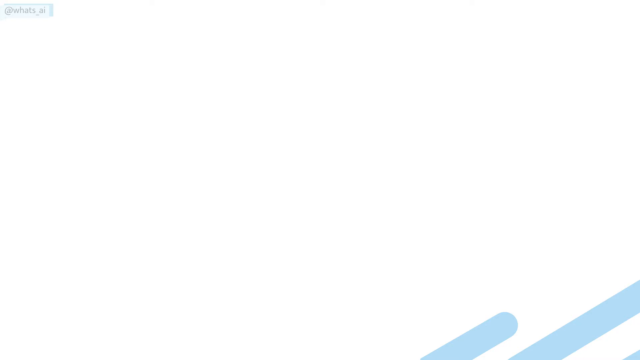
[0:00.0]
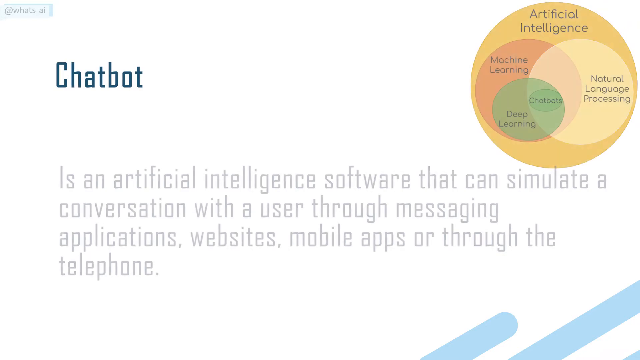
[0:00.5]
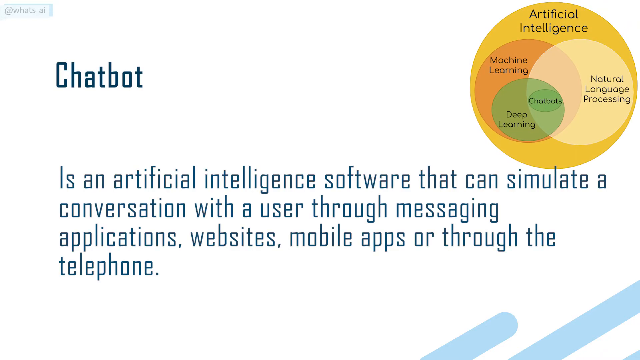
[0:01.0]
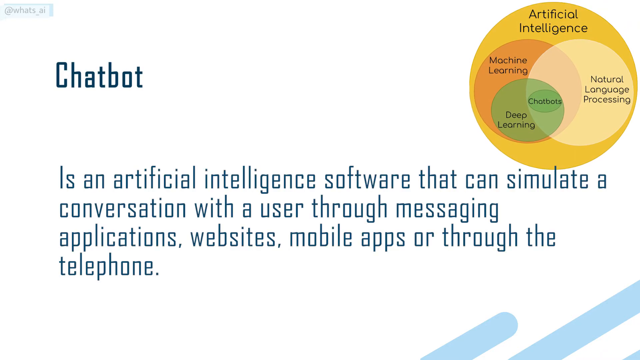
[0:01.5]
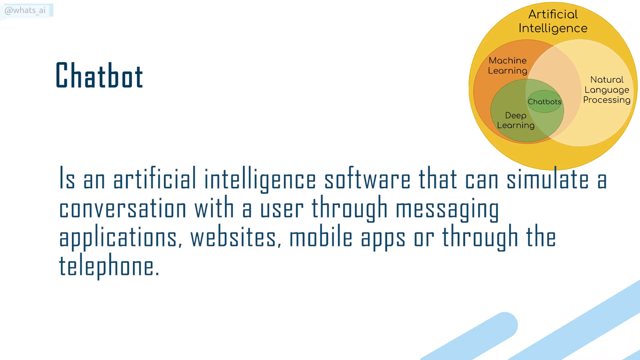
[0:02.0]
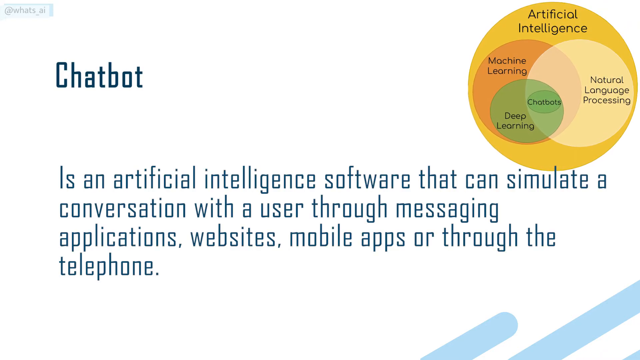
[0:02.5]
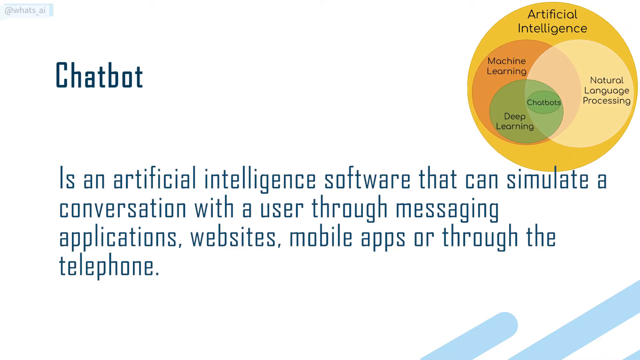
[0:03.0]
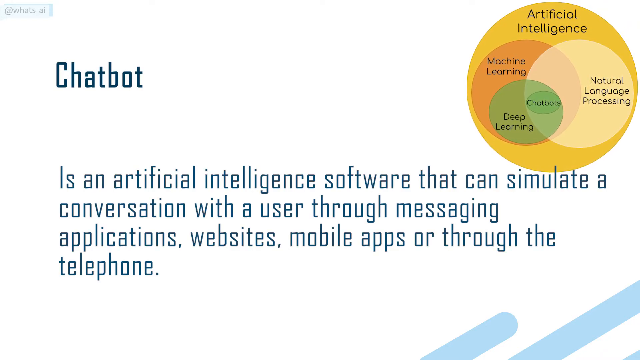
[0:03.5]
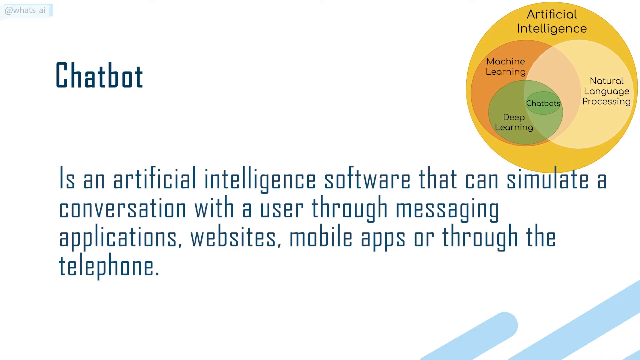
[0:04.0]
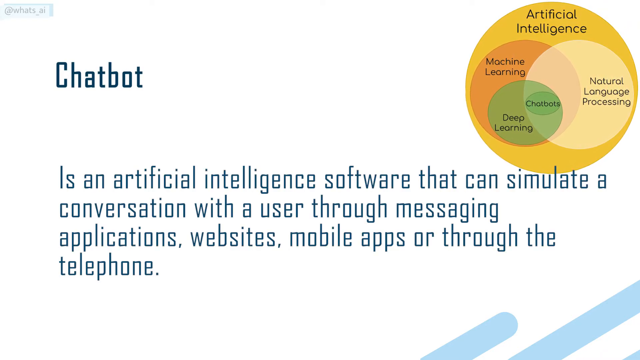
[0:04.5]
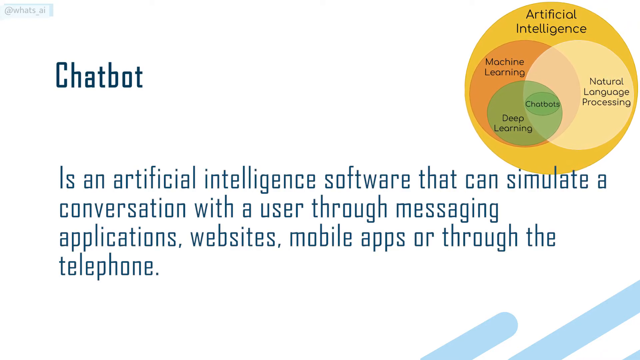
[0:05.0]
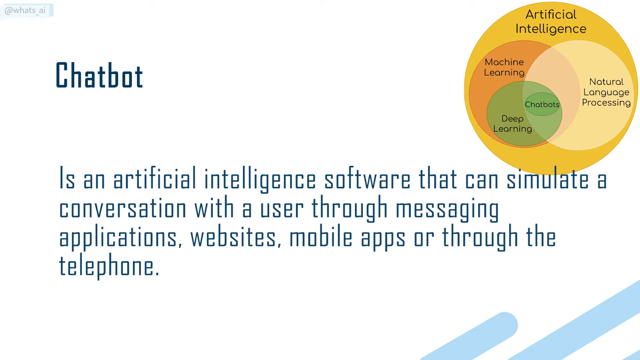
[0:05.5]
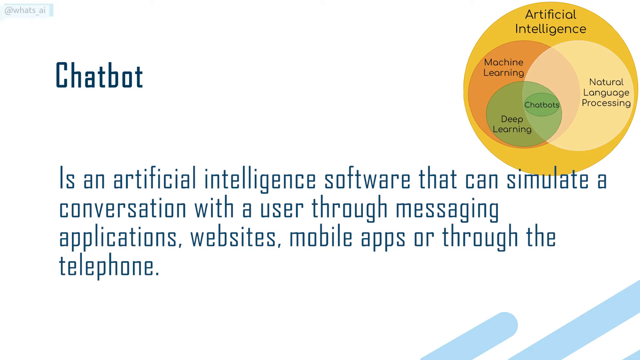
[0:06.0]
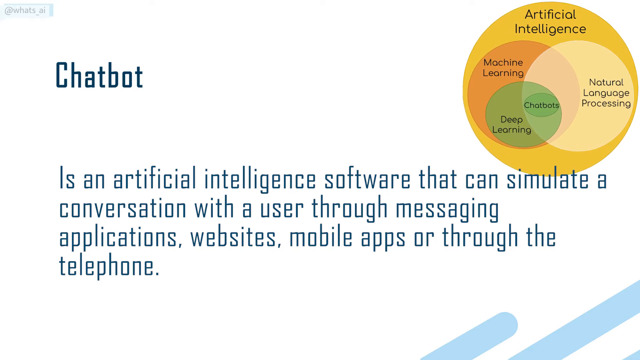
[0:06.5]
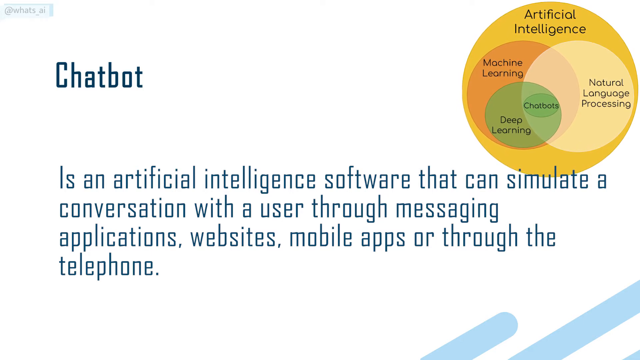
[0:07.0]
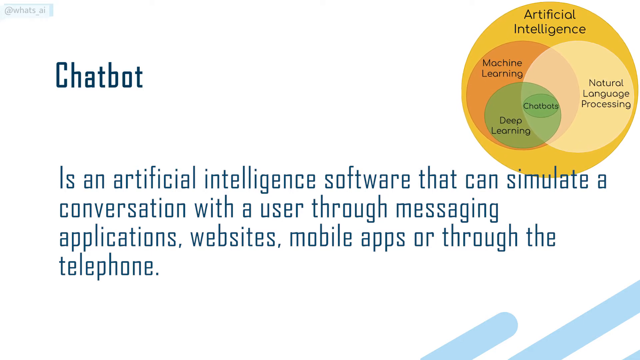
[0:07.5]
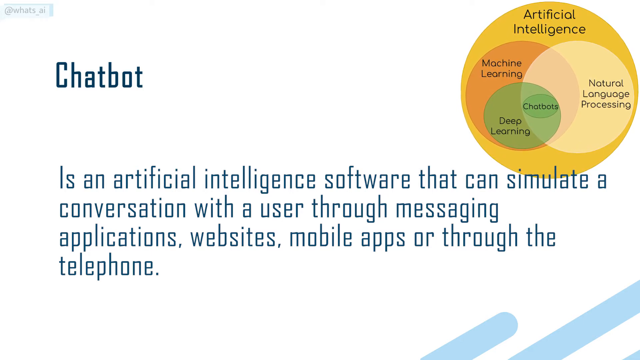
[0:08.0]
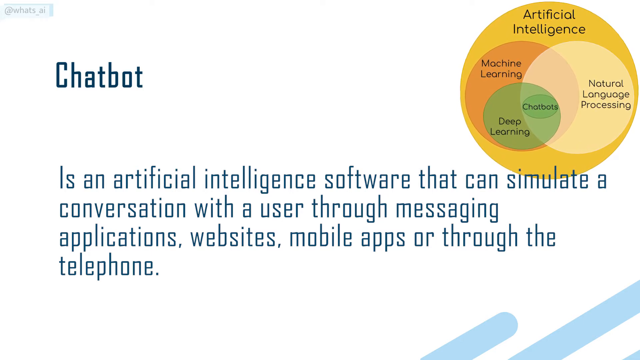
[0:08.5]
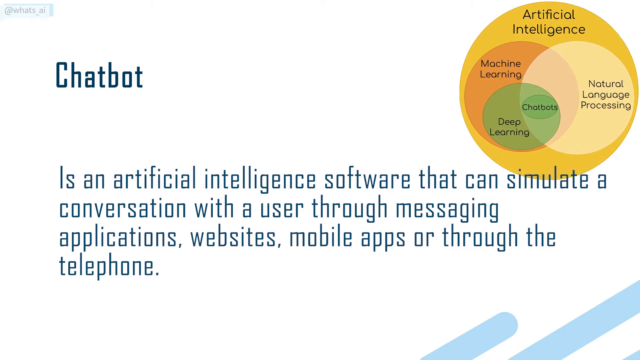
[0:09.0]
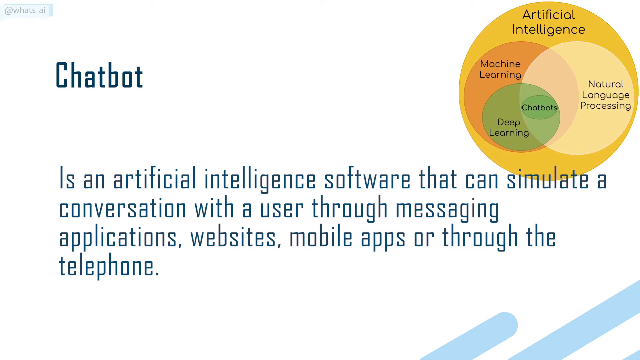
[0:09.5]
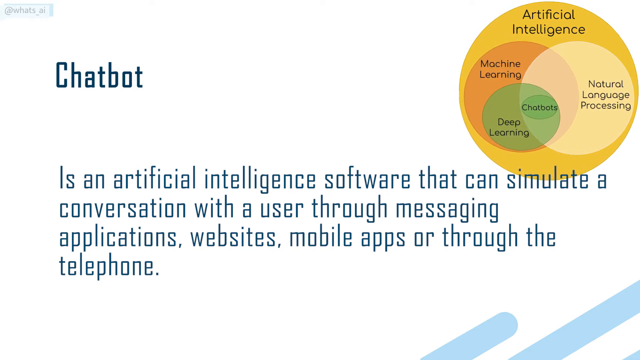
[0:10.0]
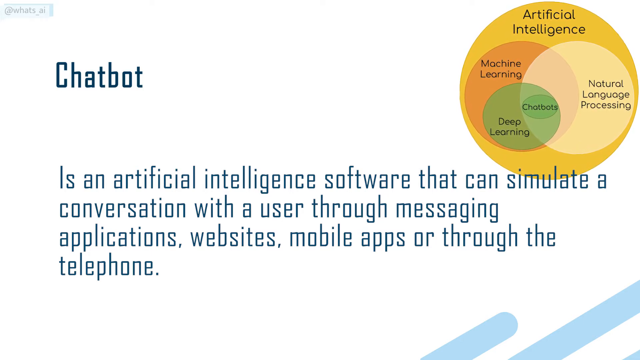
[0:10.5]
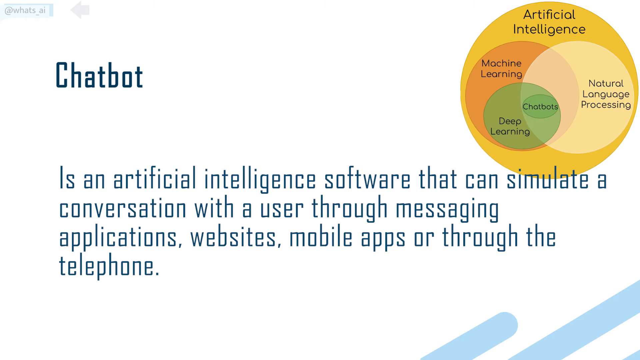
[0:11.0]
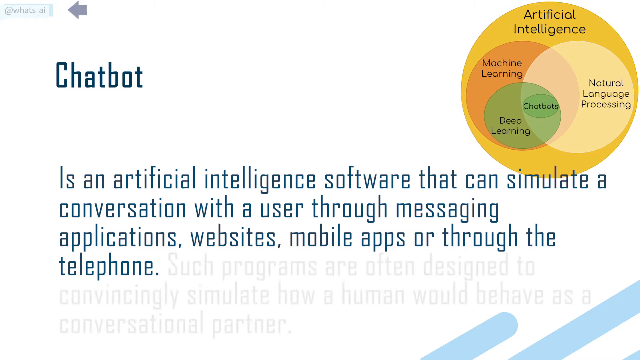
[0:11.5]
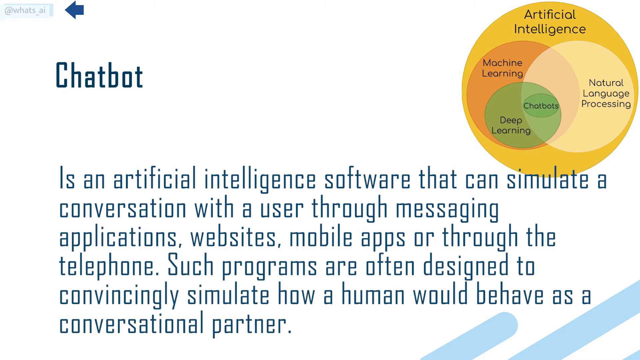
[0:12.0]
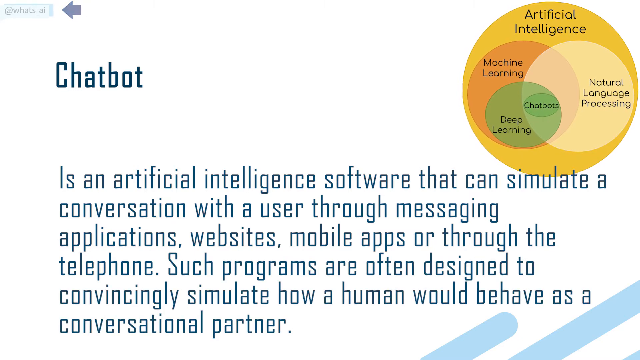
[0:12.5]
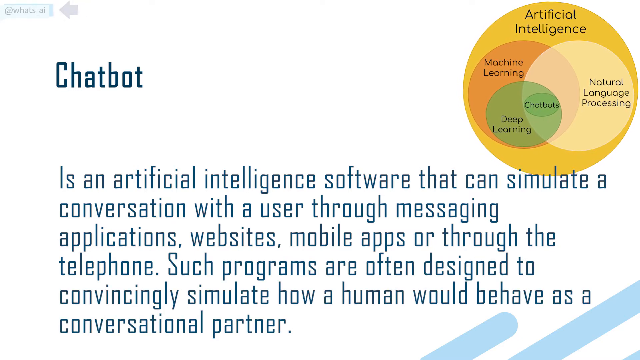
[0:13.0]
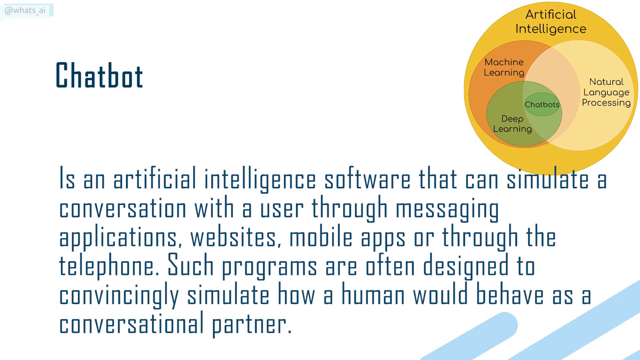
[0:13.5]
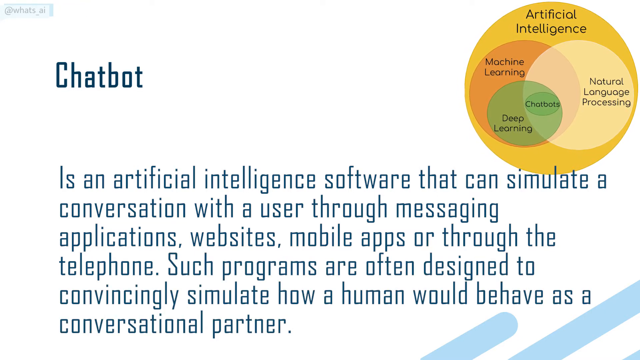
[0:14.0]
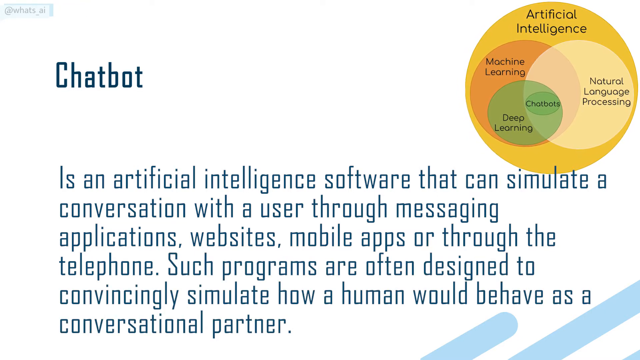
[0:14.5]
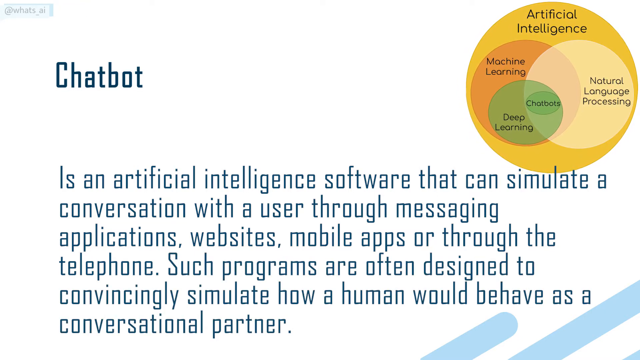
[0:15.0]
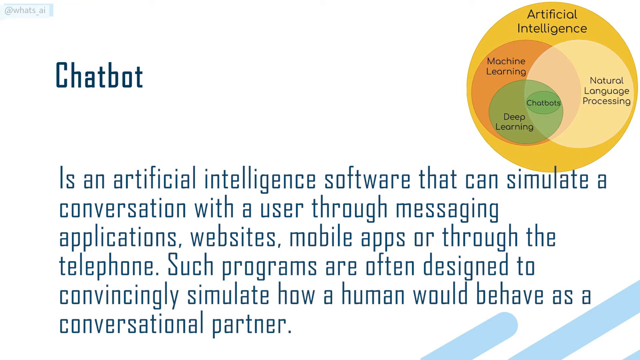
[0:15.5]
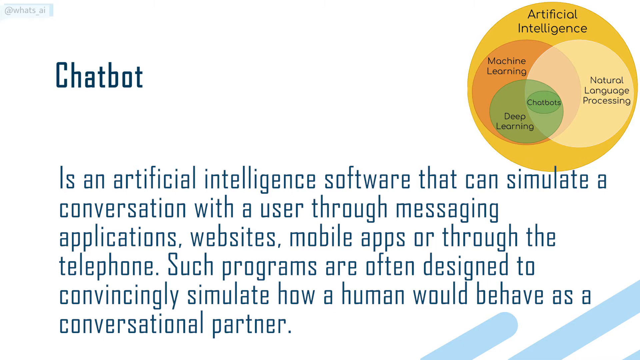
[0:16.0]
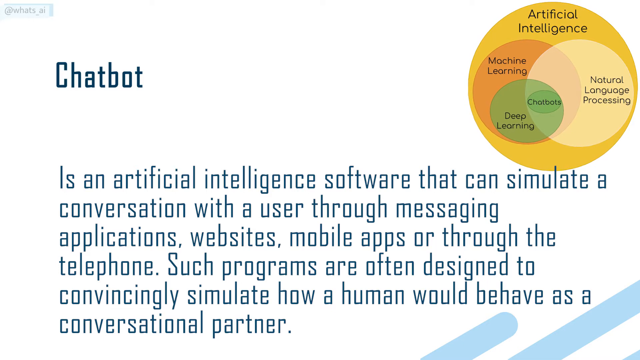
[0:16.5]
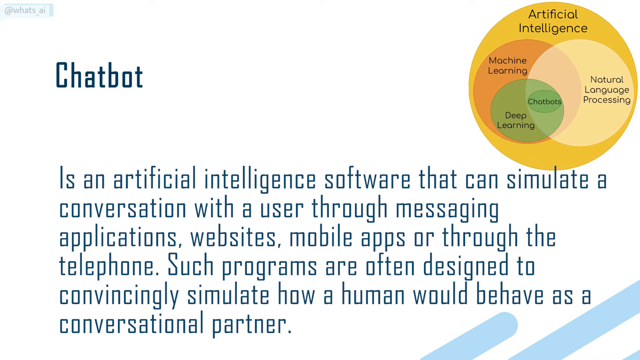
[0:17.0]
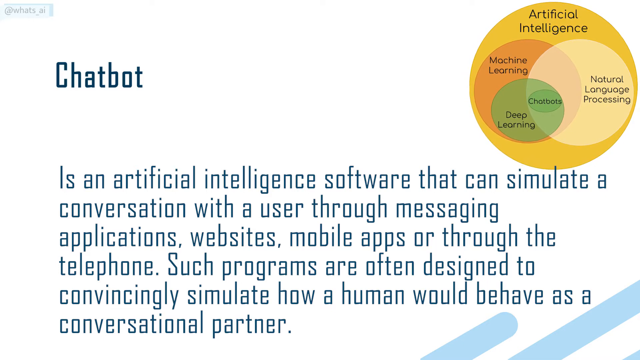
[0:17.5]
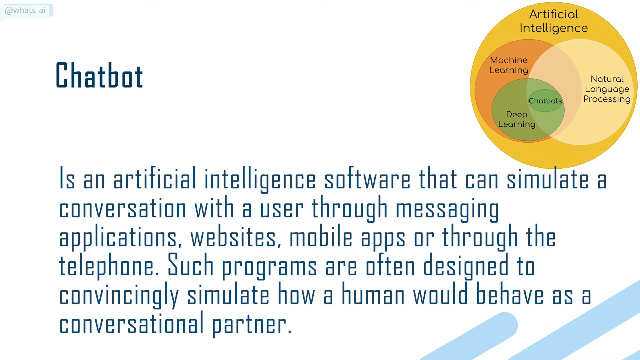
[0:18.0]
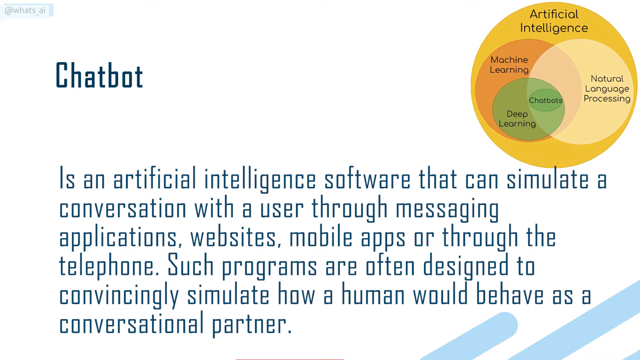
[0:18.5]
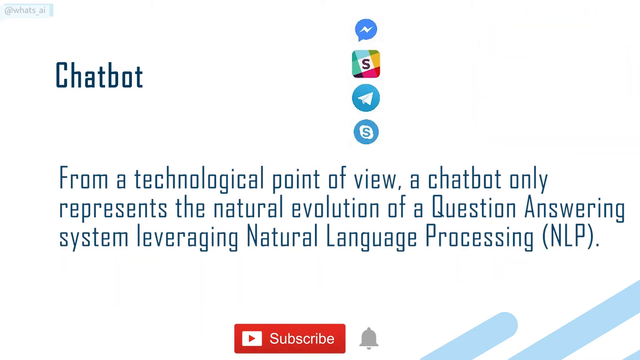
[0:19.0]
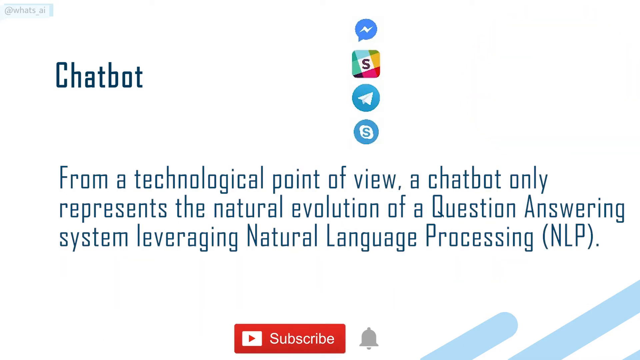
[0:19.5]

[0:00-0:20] The screen is full of words about a chatbot. Beneath the word "chatbot" the text reads "is an artificial intelligence software that can simulate a conversation with a user through messaging applications, websites, mobile apps, or through the telephone." Up in an upper corner, a big circle says "artificial intelligence" and contains little circles in the middle: "chatbots" is connected to "deep learning," which is inside "machine learning," which also goes along in the diagram with "natural language processing." More words appear, reading "such programs are often designed to convincingly simulate how a human would behave as a conversational partner." These words are added below the earlier text until the page runs out of room, and then the text reads "from a technical point of view, a chatbot only represents the natural evolution of a question-answering system leveraging natural language processing, NLP."